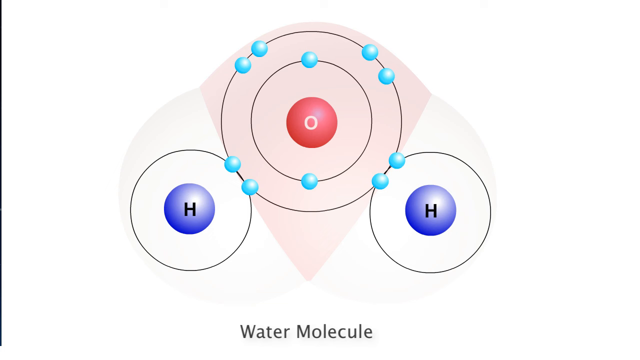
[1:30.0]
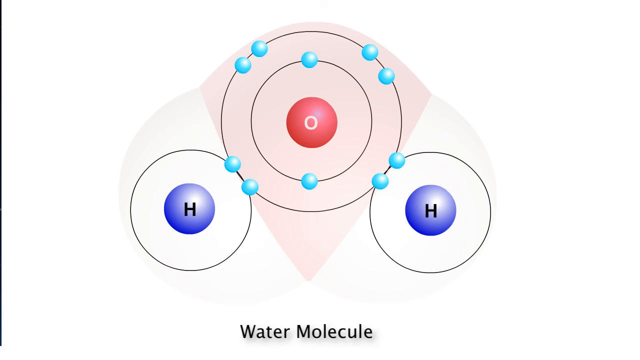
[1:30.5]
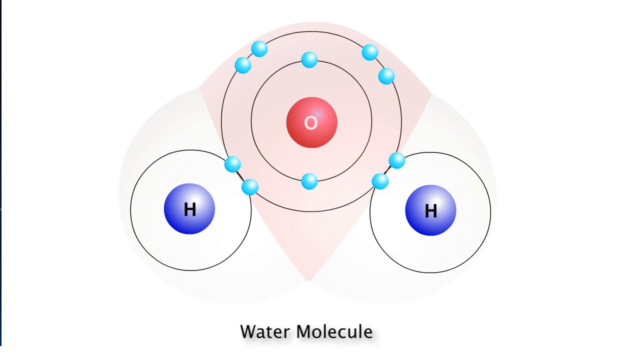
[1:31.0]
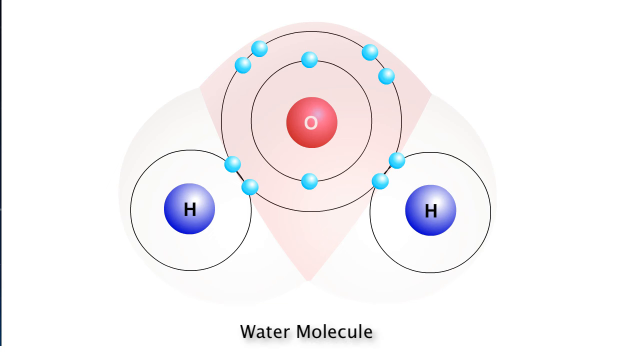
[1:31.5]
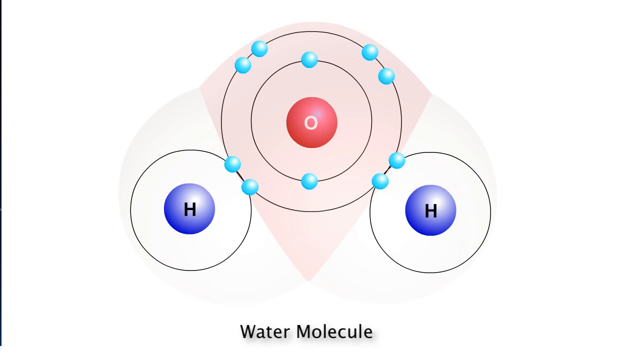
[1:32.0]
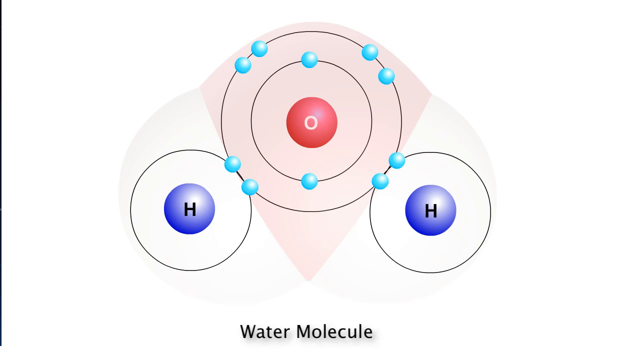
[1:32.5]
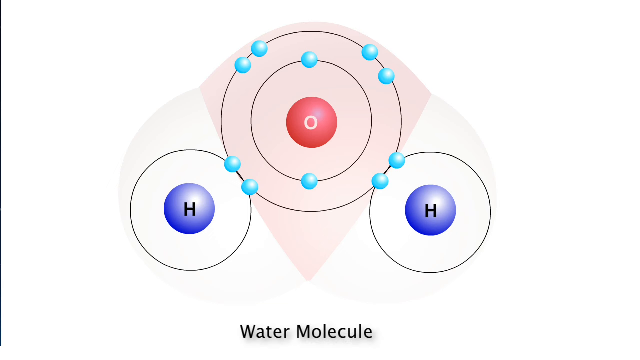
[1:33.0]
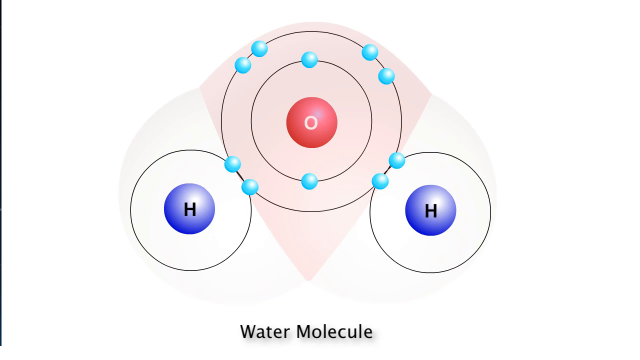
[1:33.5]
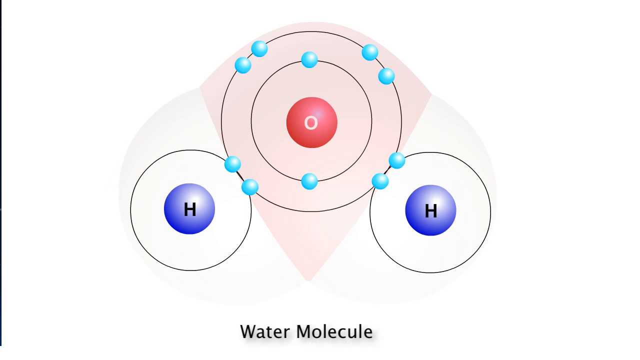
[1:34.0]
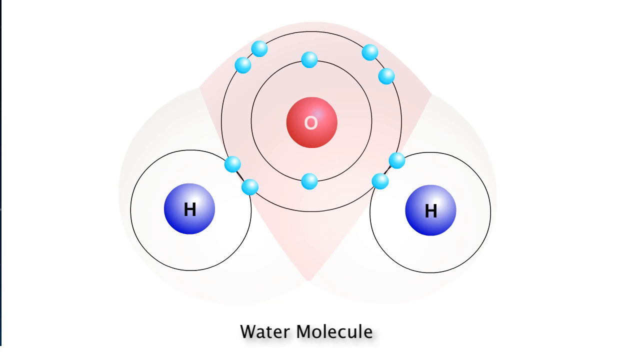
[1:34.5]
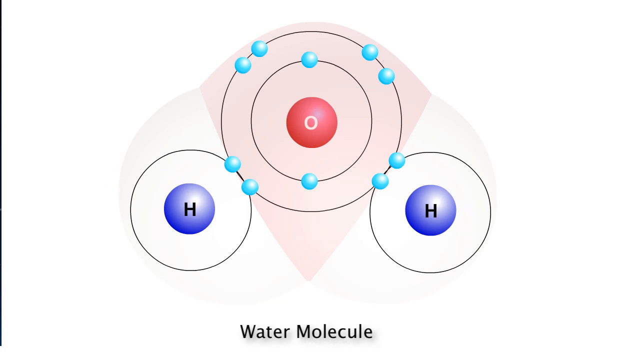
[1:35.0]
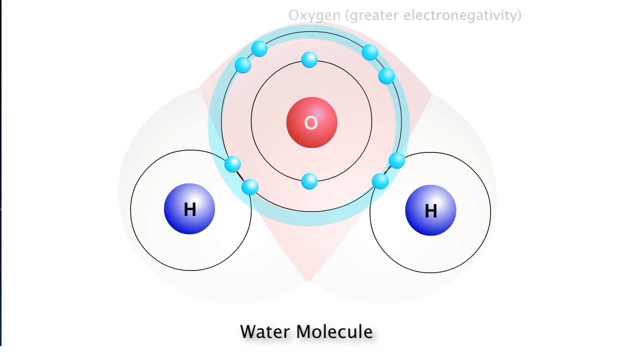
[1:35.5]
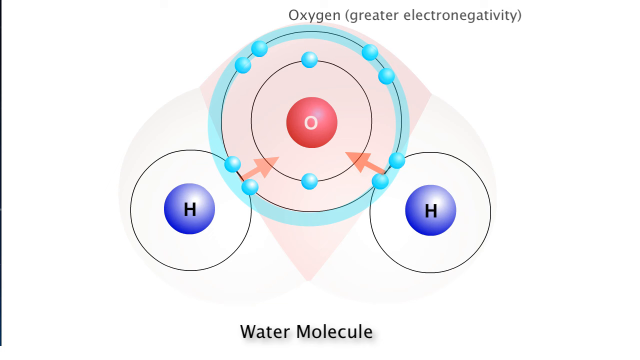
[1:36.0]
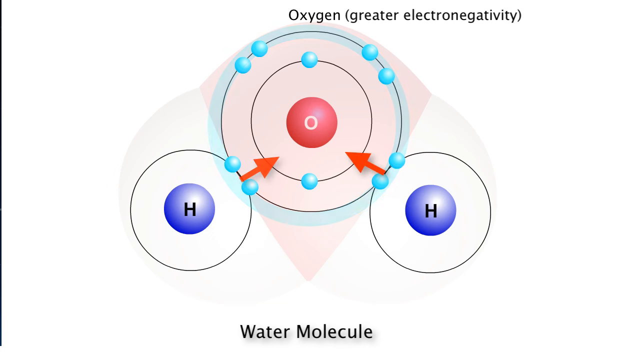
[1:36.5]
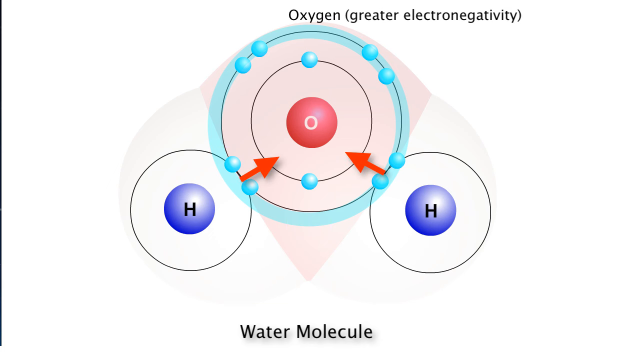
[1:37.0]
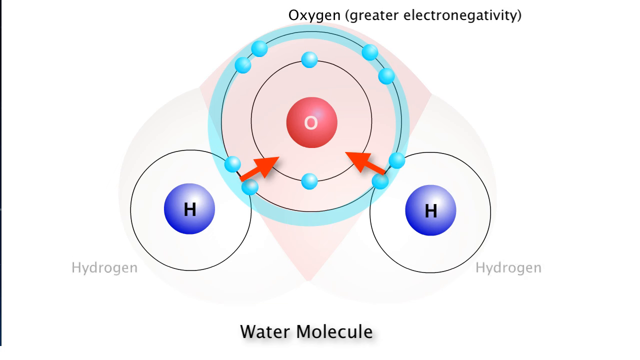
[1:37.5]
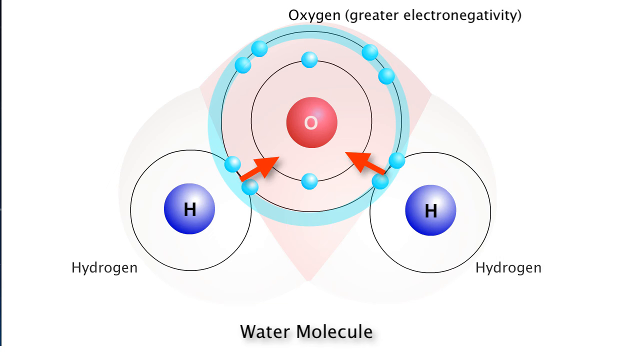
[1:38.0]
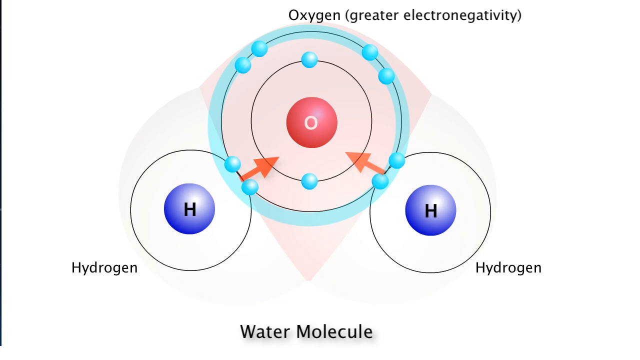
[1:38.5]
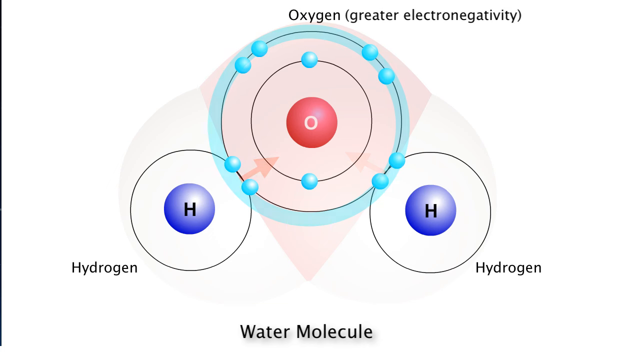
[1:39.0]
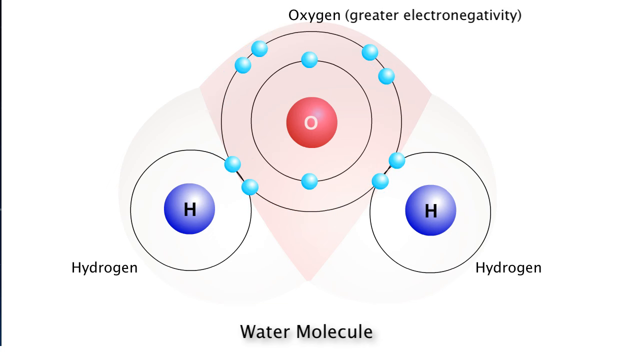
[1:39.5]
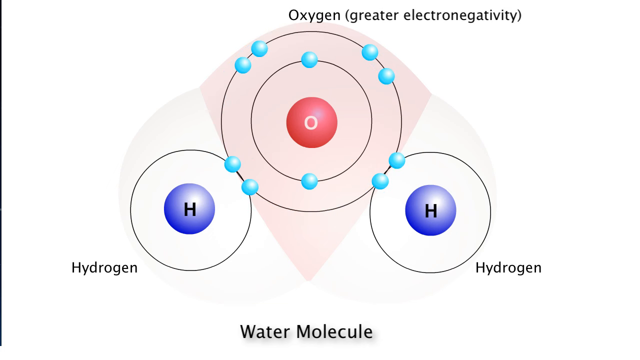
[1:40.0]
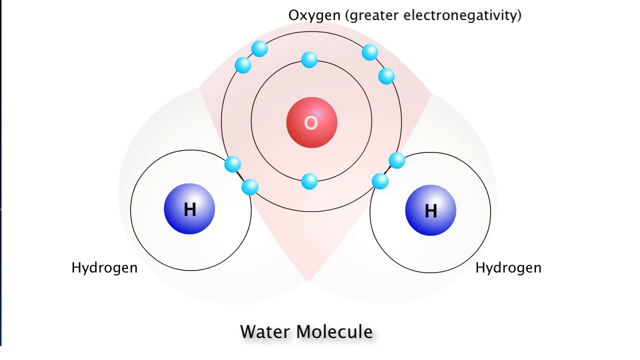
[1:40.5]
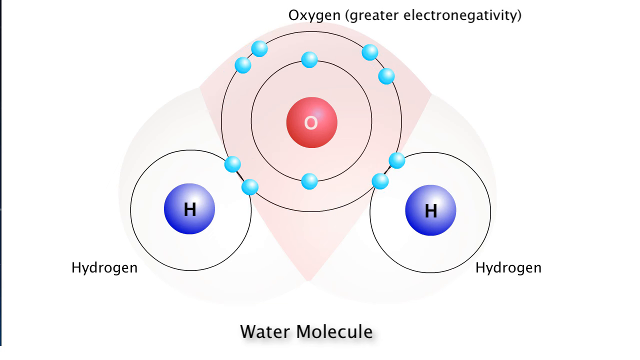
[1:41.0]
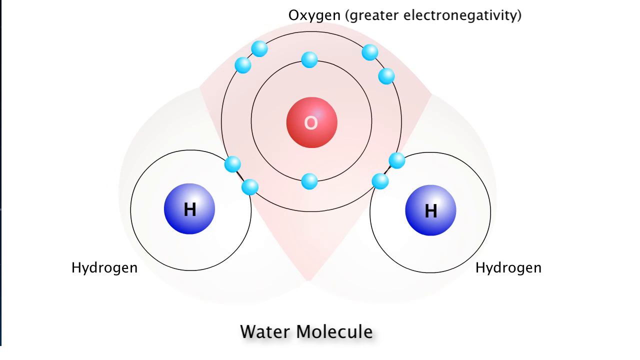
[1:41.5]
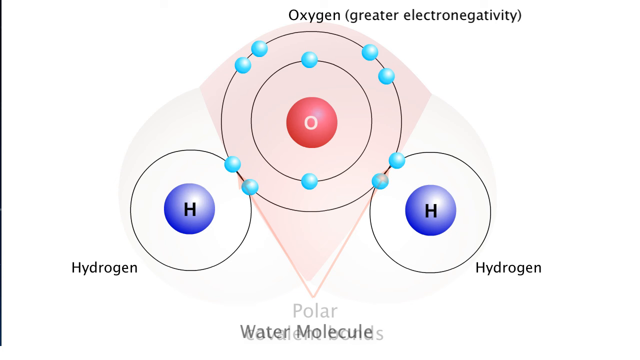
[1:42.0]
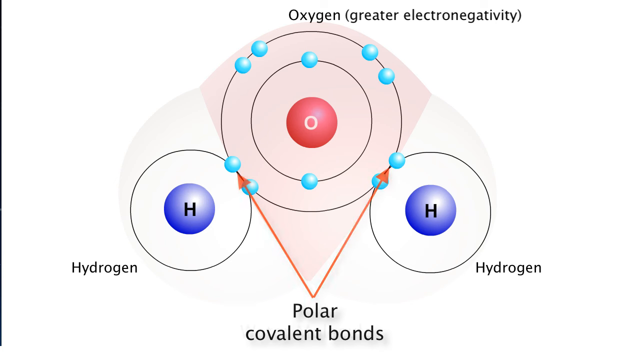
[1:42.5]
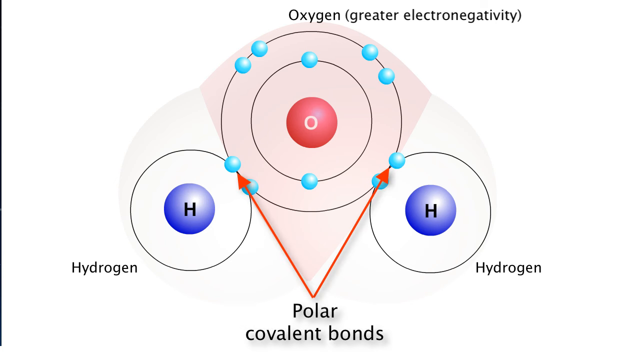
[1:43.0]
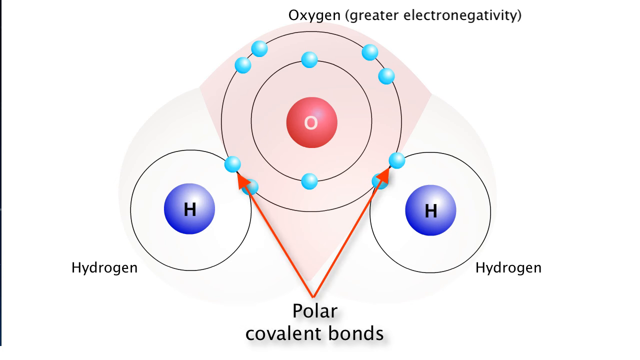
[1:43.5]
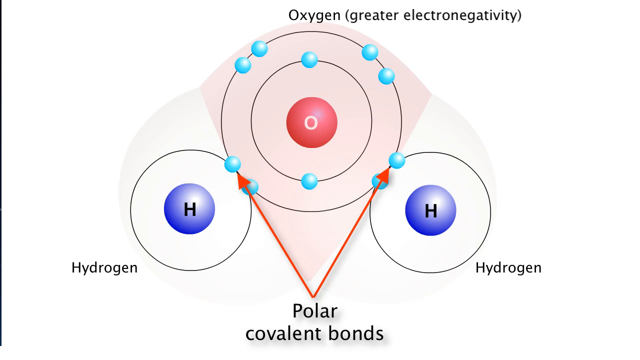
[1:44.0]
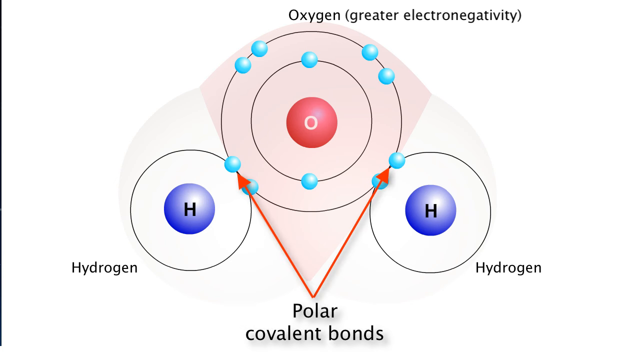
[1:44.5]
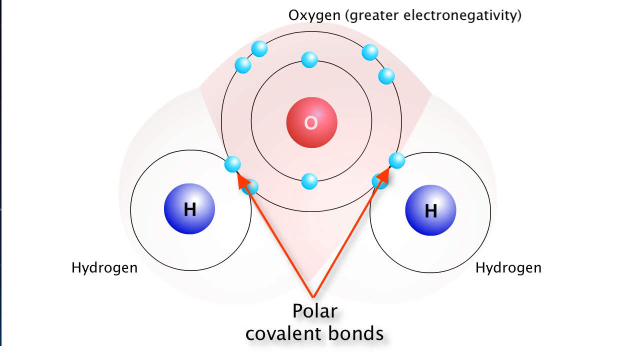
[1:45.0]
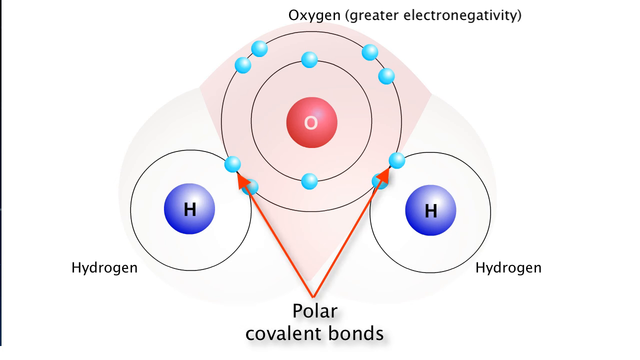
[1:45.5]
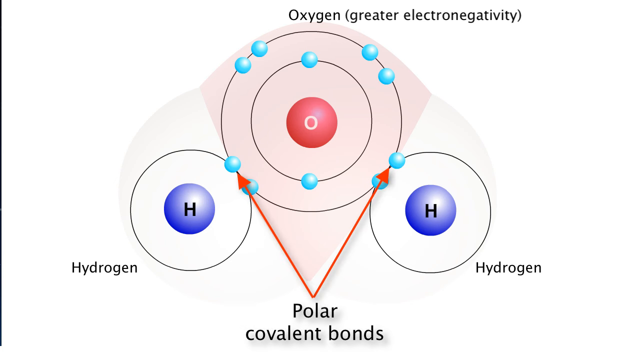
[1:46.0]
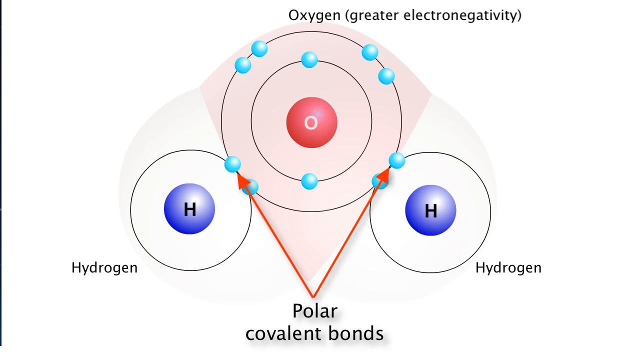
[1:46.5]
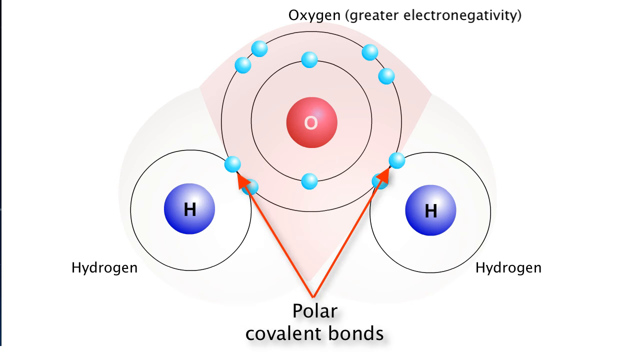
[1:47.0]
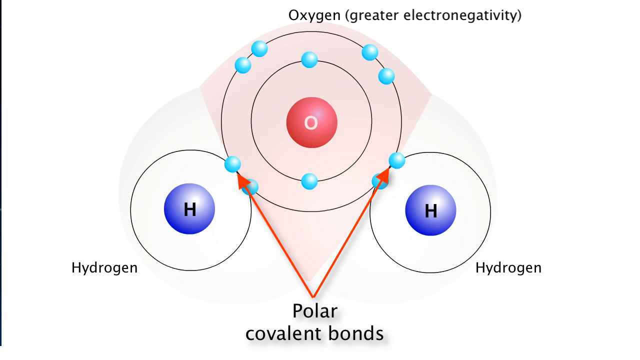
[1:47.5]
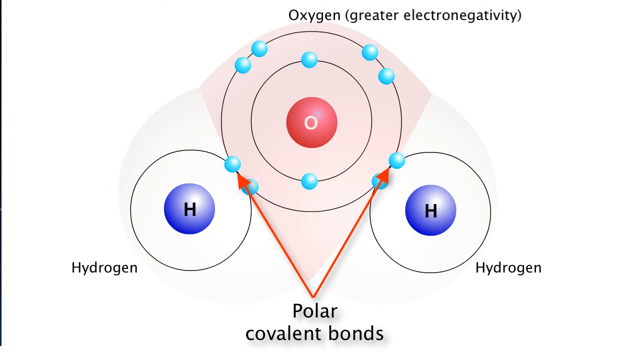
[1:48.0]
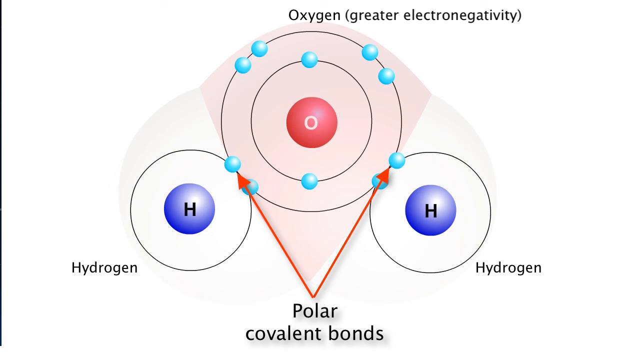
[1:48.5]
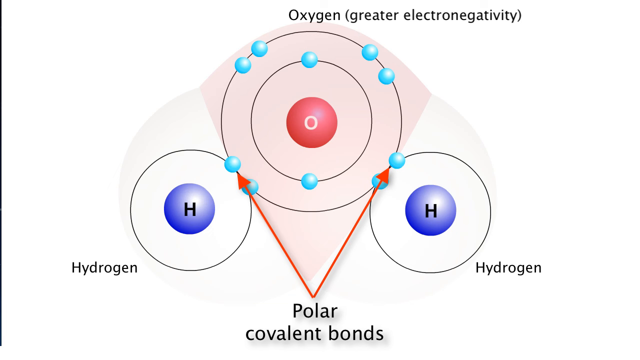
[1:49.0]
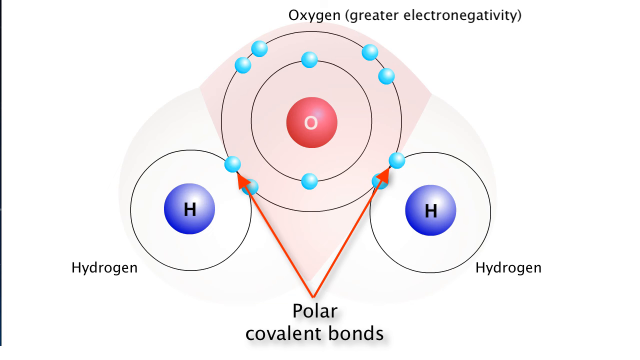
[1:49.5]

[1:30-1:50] The same diagram shows a red ball toward the middle of the screen with a white O, presumably oxygen, surrounded by concentric black circles. Underneath it is a kind of wedge-shaped pink or red region. Blue spheres are on the black circles around the oxygen, apparently electron shells. To the left and right are purple balls with black edges, presumably hydrogen, each with a single black circle and each connected to the oxygen by two blue spheres. Beneath the hydrogens is a kind of gray area. A caption reading "water molecule" appears in black across the bottom and stays for a moment. Red arrows then point from the black ring around each hydrogen toward the oxygen. The word "hydrogen" appears in black flanking each hydrogen, and at the top "oxygen" appears in black with "(greater electronegativity)" in parentheses. At the bottom, "water molecule" is replaced by "polar covalent bonds", with red arrows pointing at the blue balls connecting the hydrogens to the oxygen. This remains on screen for a moment.